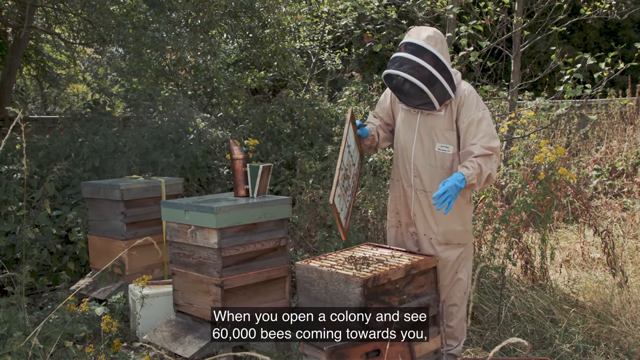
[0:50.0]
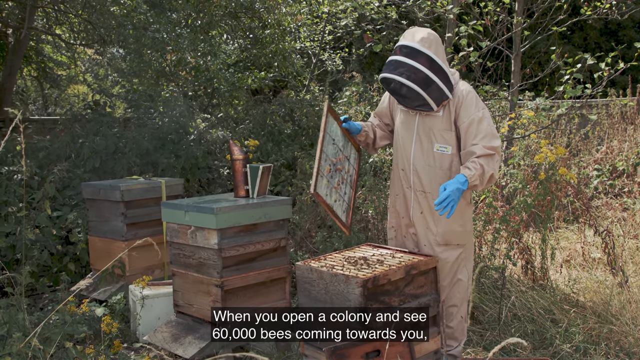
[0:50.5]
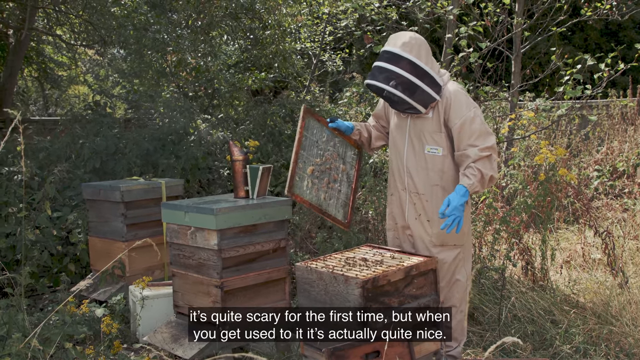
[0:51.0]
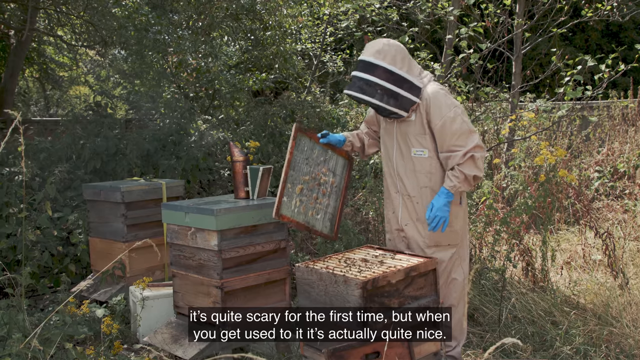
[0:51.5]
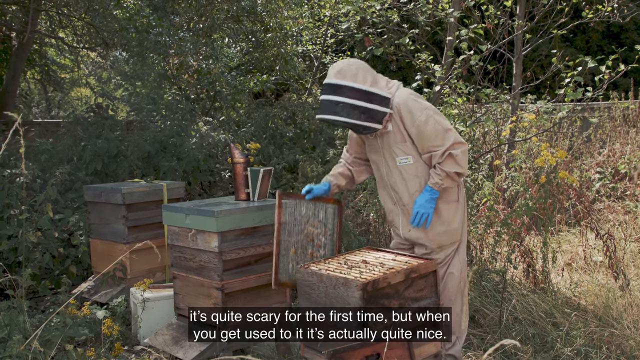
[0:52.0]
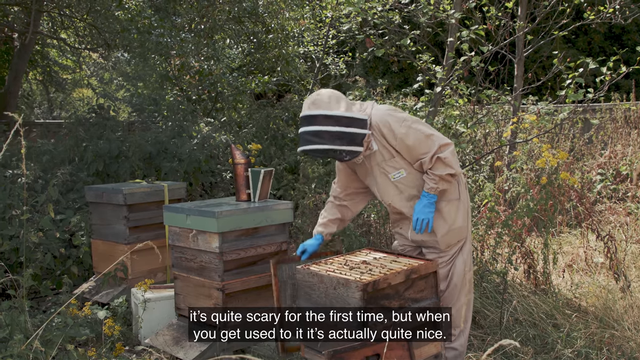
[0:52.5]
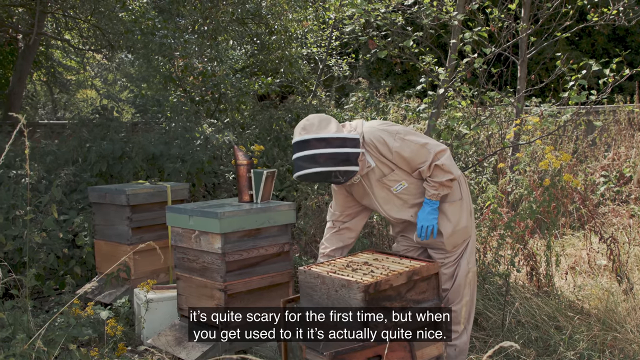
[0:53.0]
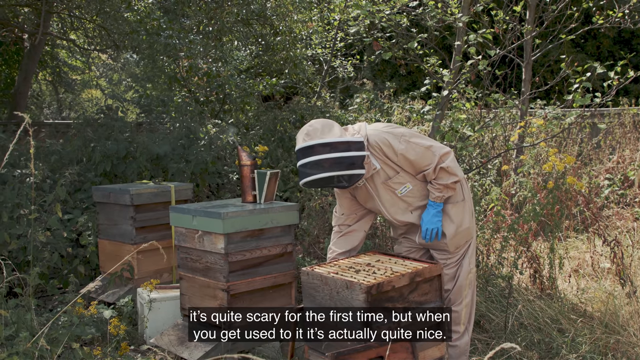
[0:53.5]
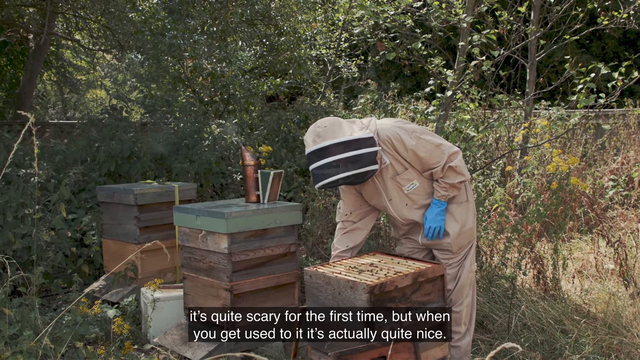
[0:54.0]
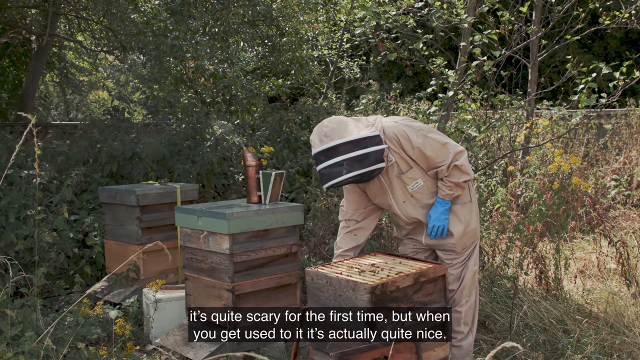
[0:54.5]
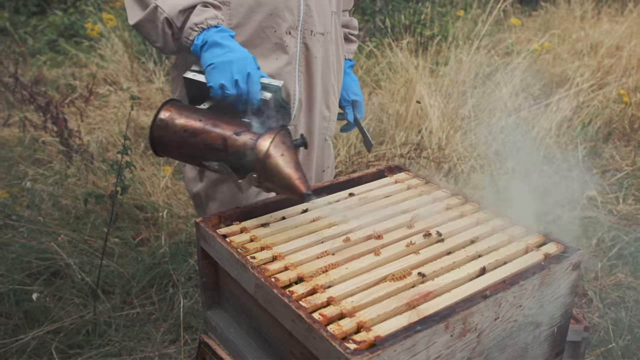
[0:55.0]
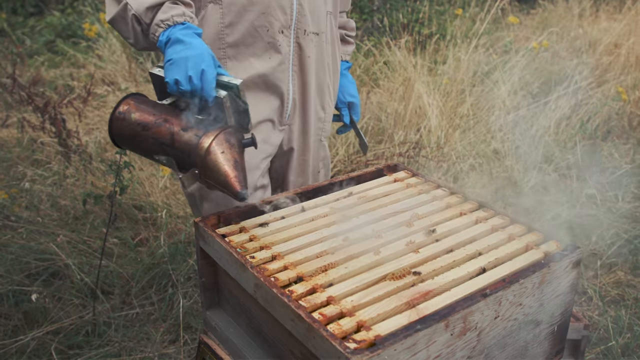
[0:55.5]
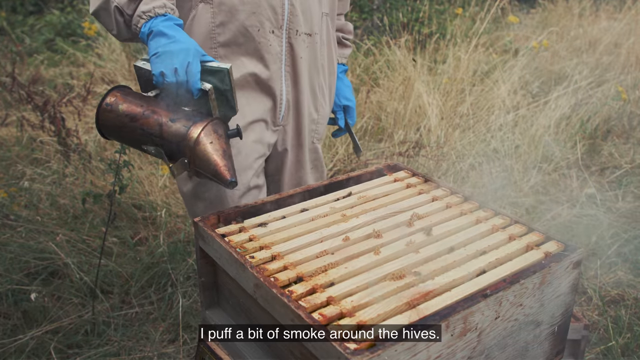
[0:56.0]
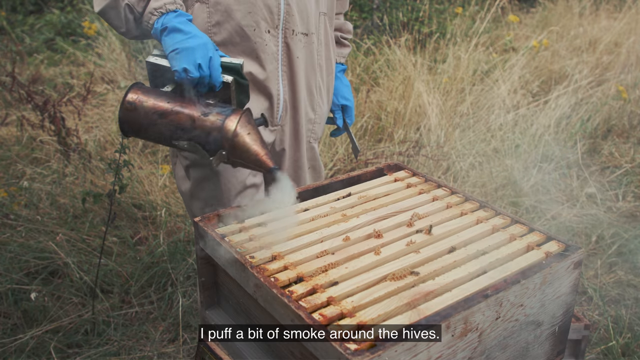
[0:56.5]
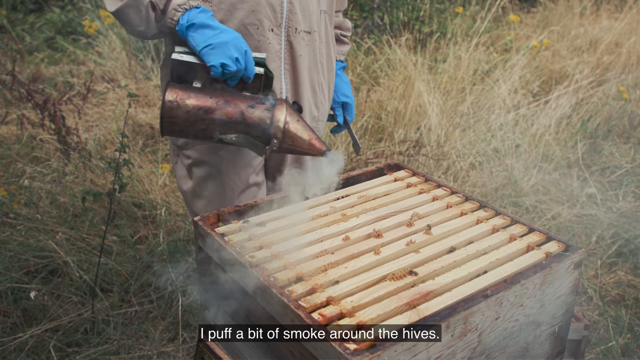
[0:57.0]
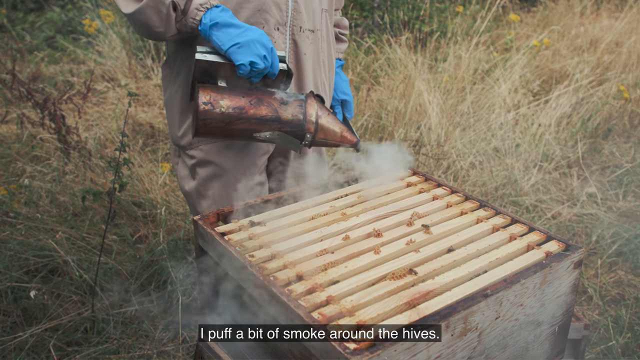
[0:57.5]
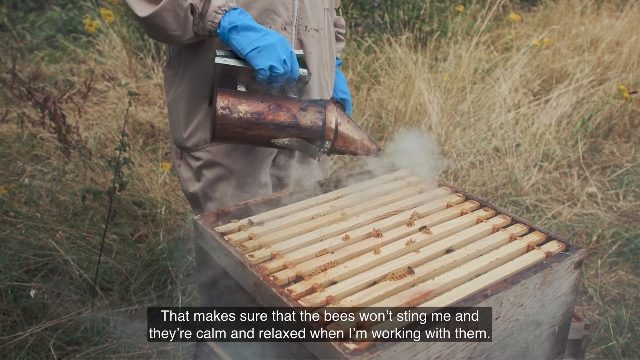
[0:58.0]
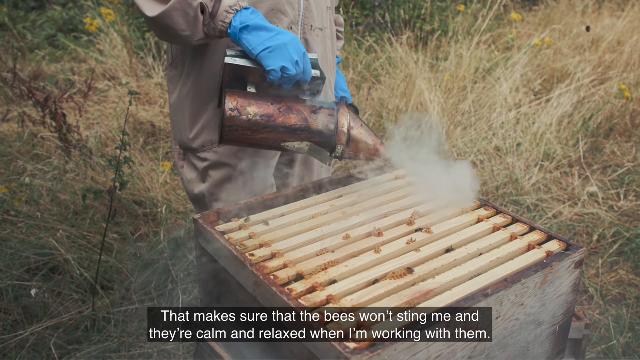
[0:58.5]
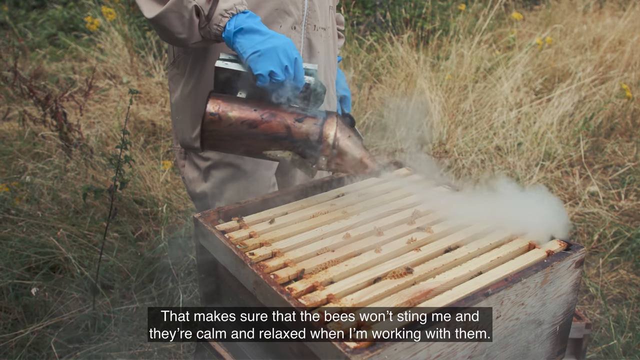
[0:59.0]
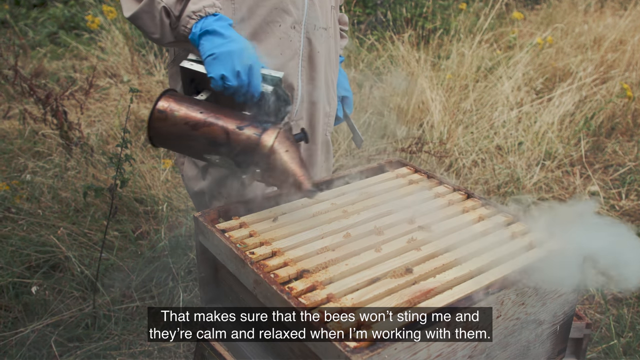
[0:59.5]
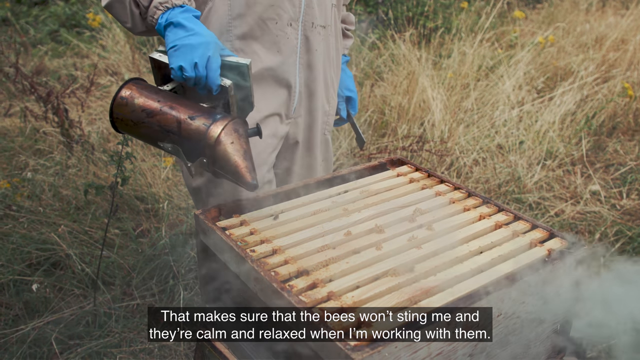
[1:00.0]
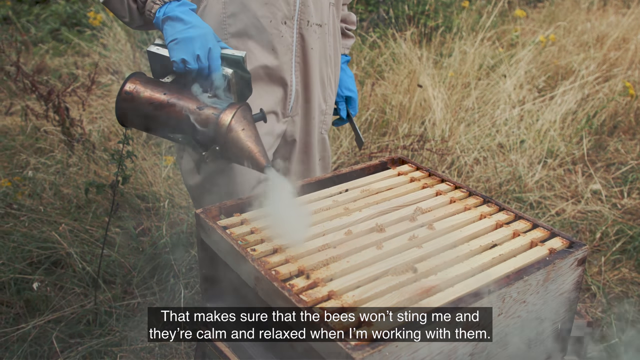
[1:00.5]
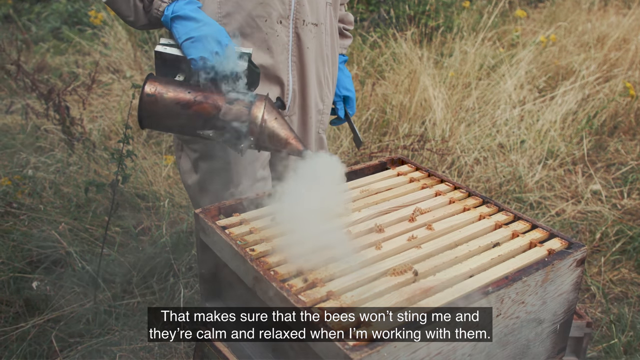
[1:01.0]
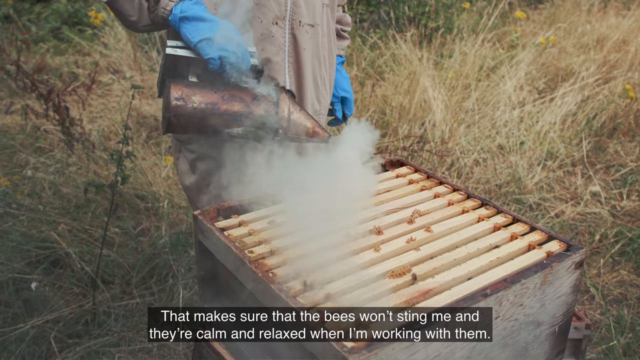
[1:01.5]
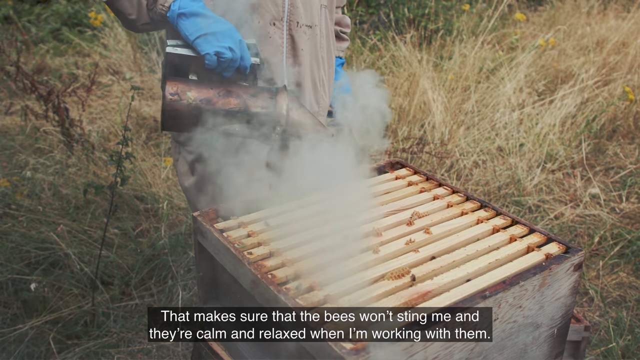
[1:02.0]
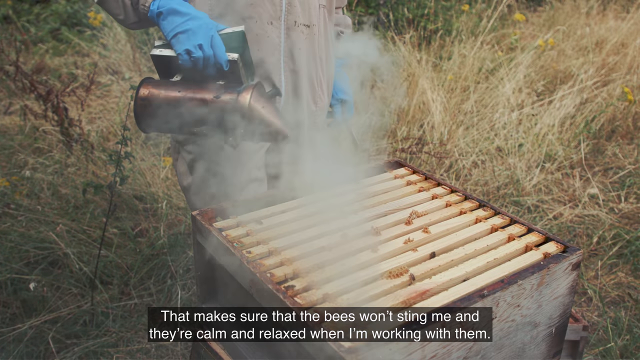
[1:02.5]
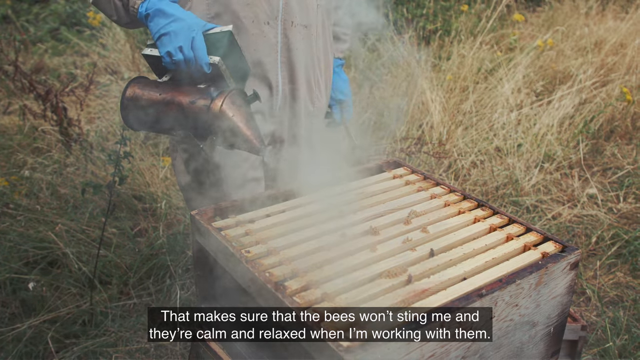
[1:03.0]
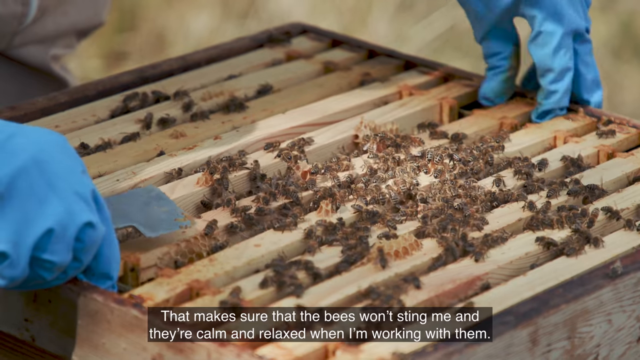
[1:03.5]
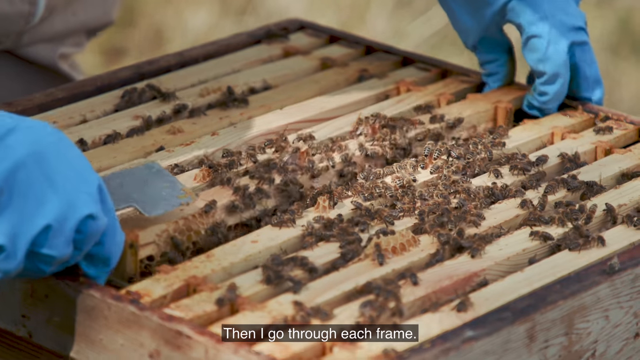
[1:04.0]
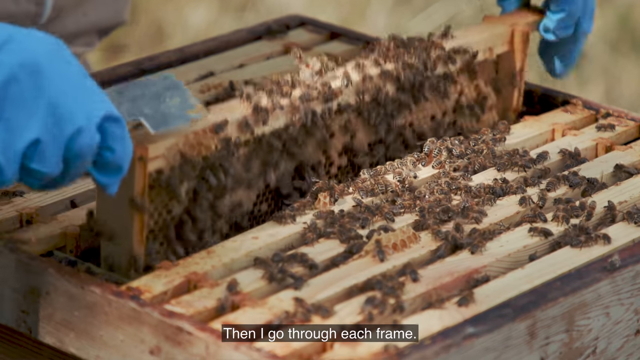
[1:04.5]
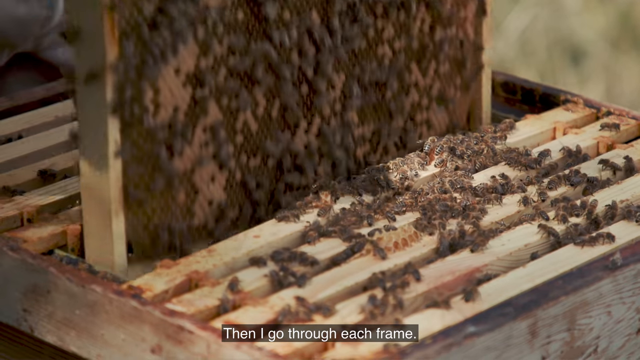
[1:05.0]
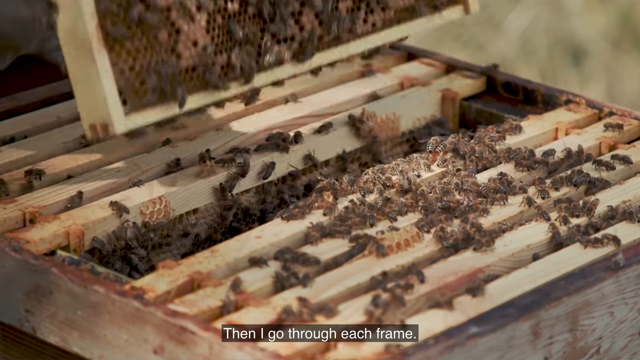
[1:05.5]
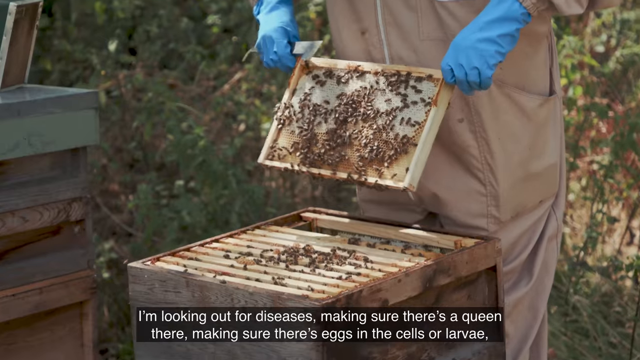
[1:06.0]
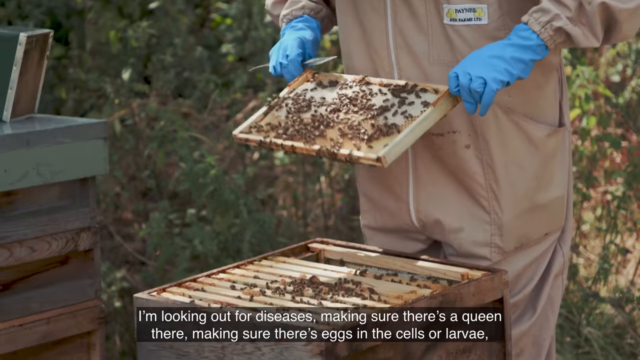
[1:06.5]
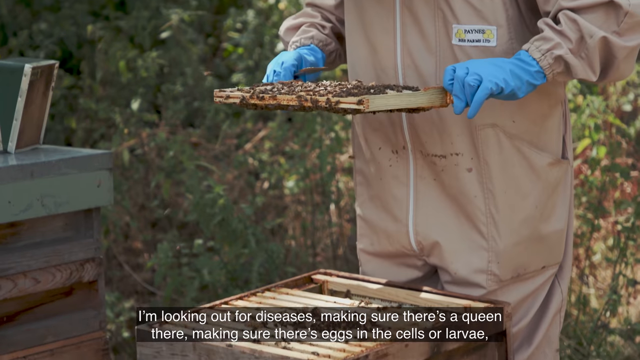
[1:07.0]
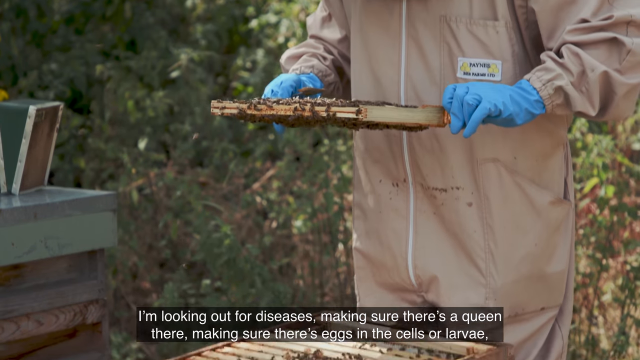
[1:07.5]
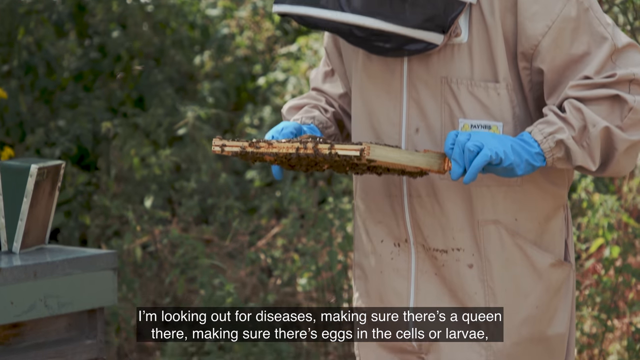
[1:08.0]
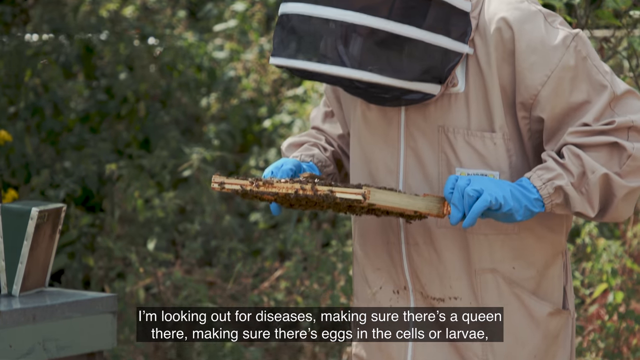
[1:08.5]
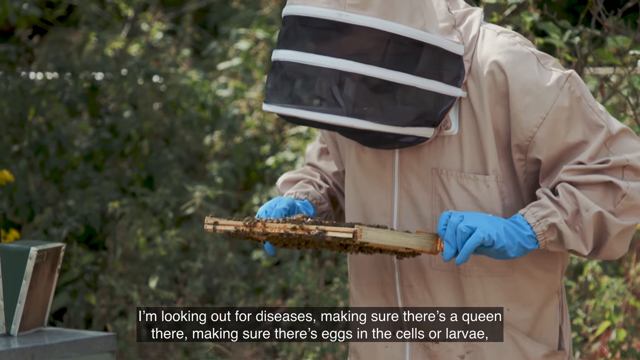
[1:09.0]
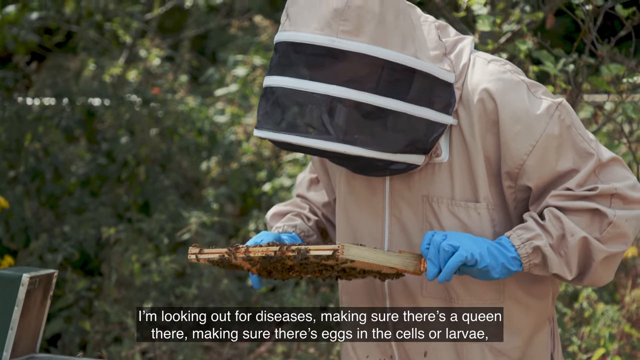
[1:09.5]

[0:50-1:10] Jones wears a protective cover and stands in a bushy place where there are some big hives. The protective gear seems to have a big black and white face mask covering his whole face, and he wears something light blue on his hands. He opens one of the beehives, smokes the bees, and then starts harvesting the honey while still standing in the bushy place. When he talks, subtitles appear at the bottom of the video.